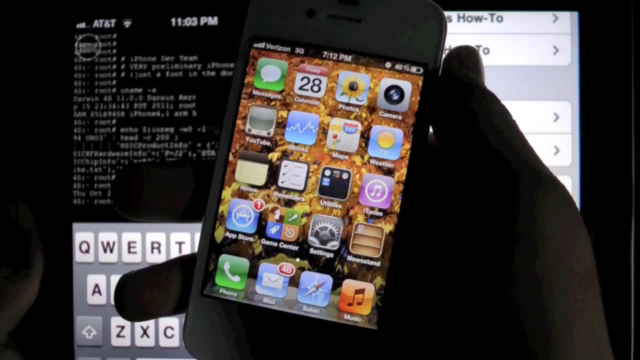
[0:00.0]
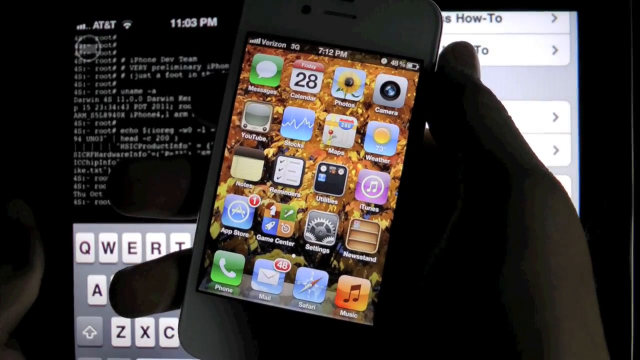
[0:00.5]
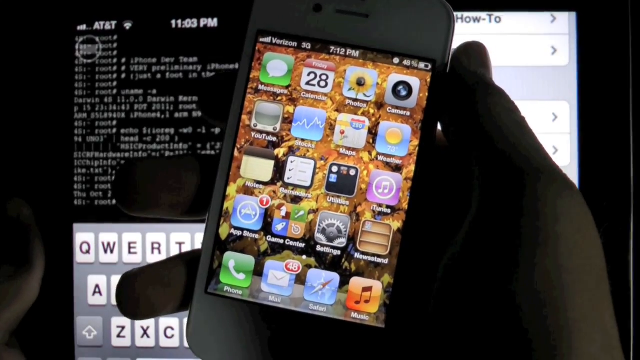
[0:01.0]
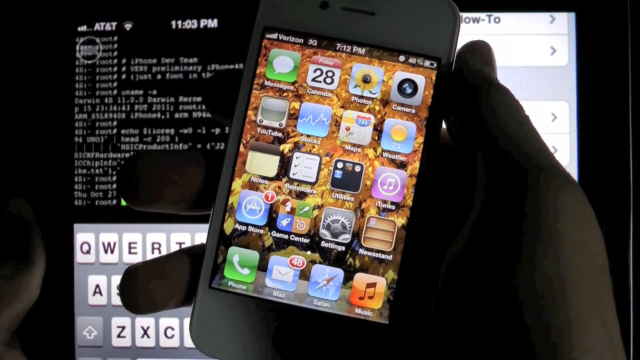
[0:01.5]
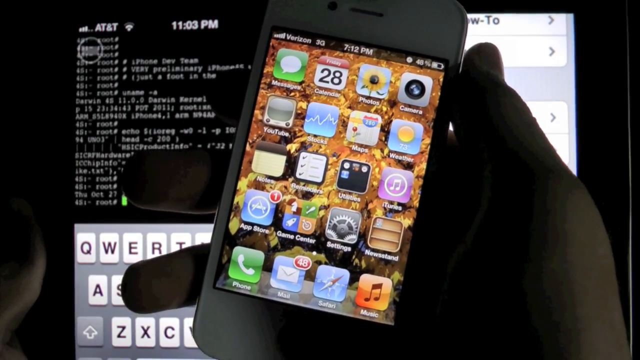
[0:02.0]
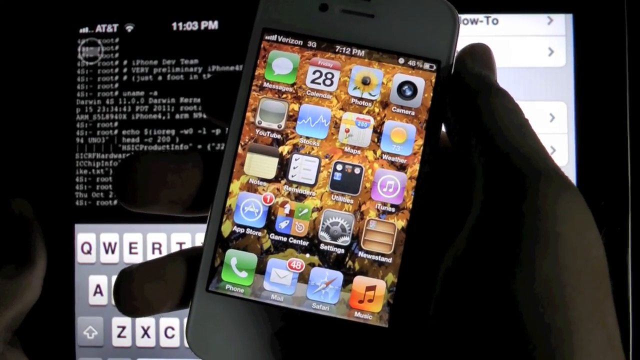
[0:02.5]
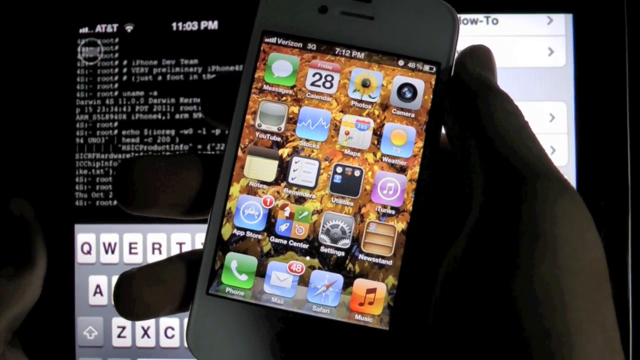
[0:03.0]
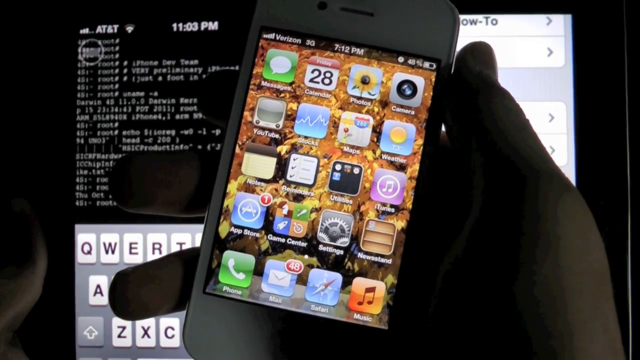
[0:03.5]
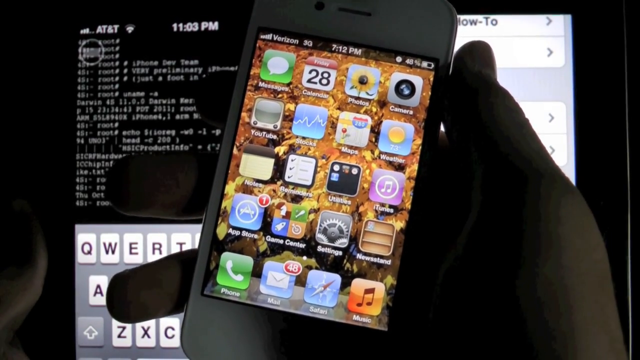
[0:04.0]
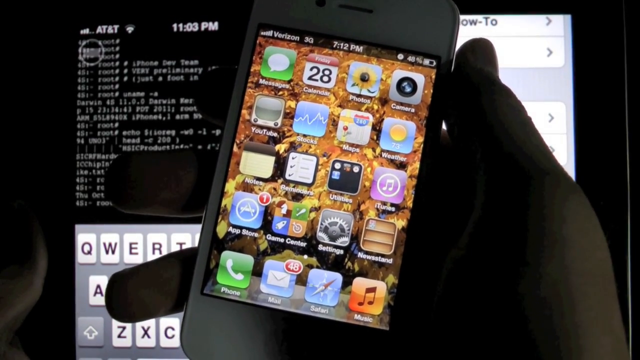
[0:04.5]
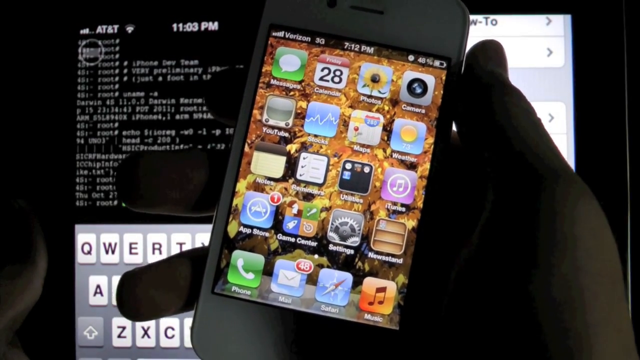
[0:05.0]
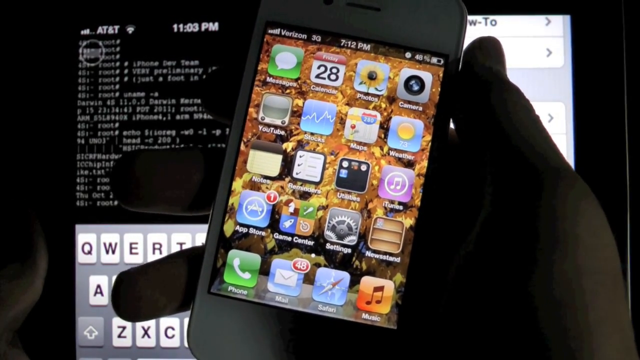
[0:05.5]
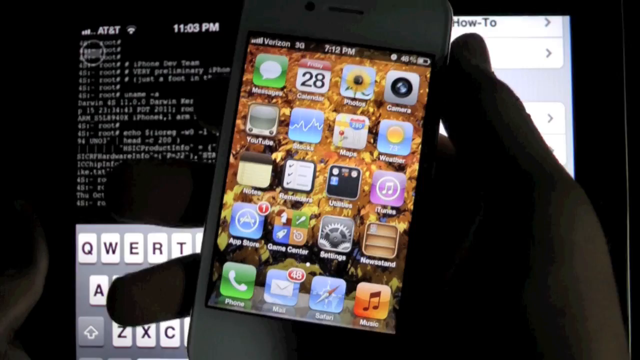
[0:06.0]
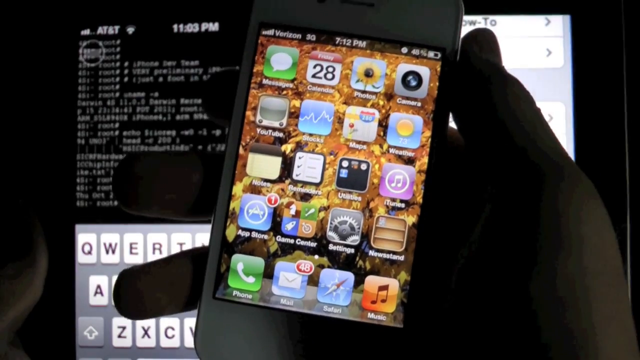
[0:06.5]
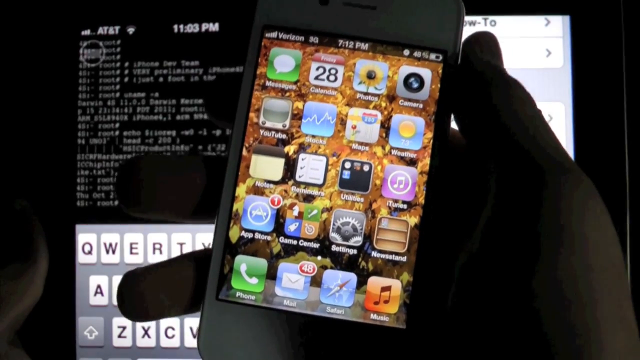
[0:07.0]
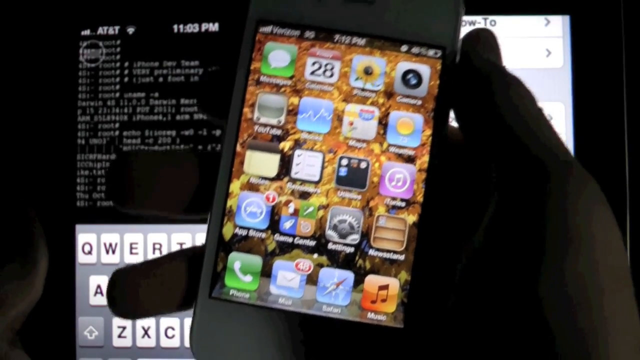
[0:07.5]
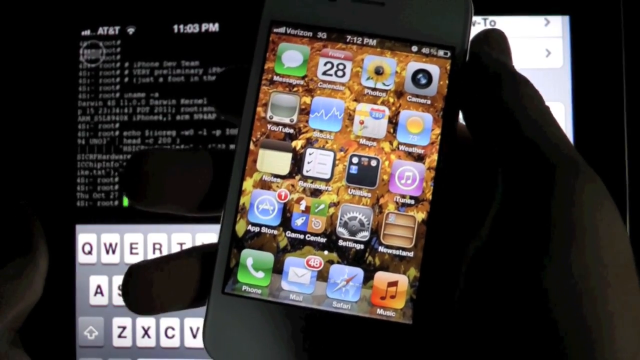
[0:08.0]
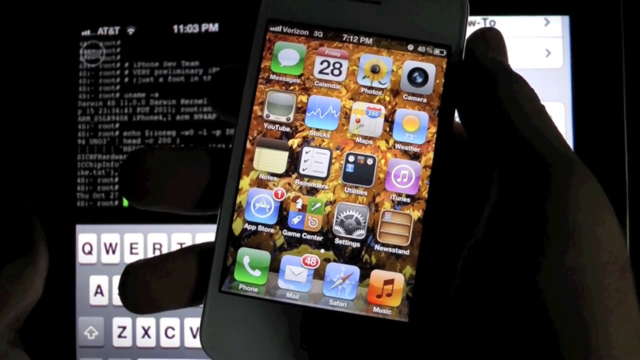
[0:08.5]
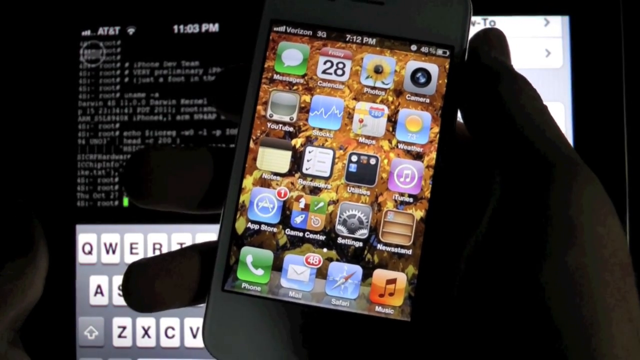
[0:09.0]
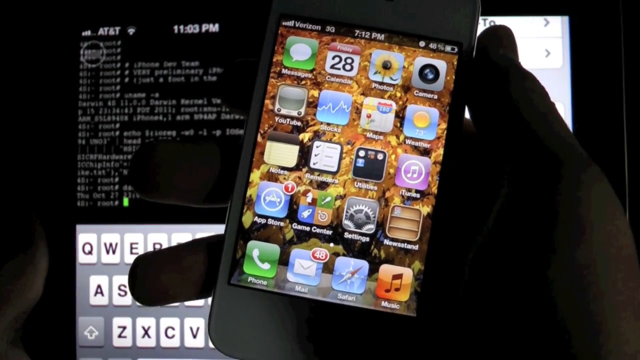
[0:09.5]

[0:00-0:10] Someone holds up a phone that looks like an iPhone, judging by the inflated look of its app icons. The phone is almost fully in view; only its top left and bottom right corners are not visible. It is held in the person's right hand, and their skin tone cannot really be made out. In the background there is some sort of computer screen with a black coding window open on the left side, and a big keyboard on the bottom left. Several apps are on the phone: a camera app at the top right, the phone app at the bottom left, and a calendar app second from the left on the top row.